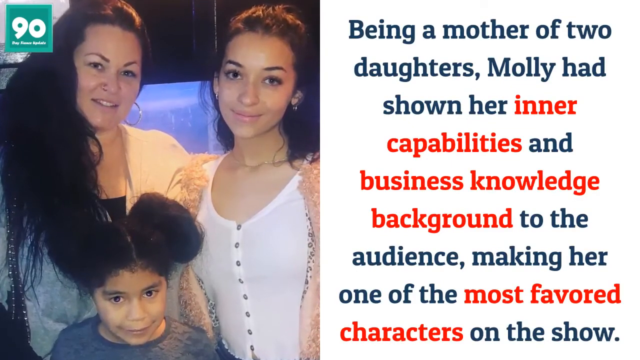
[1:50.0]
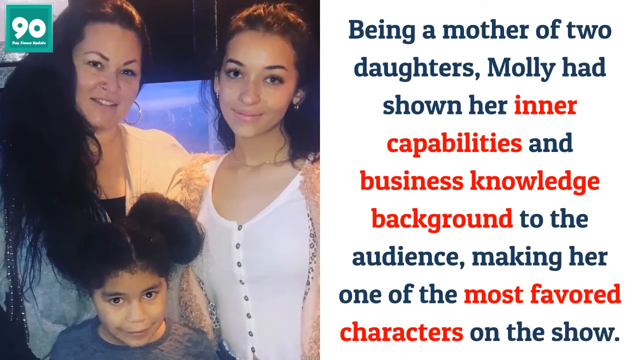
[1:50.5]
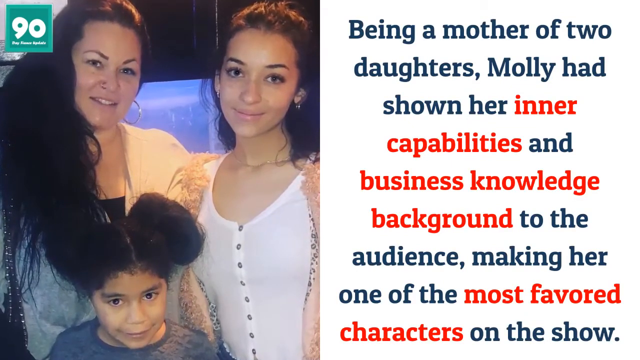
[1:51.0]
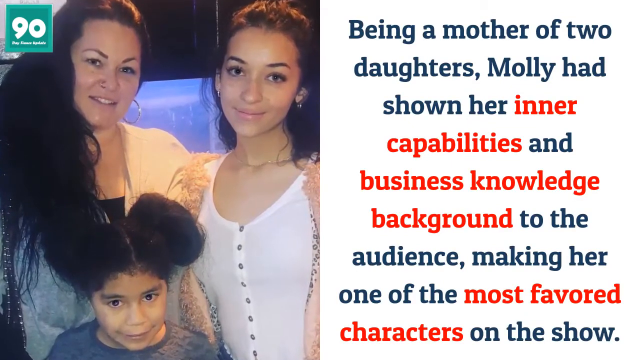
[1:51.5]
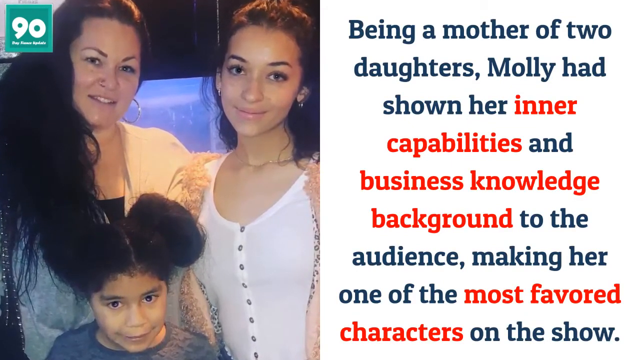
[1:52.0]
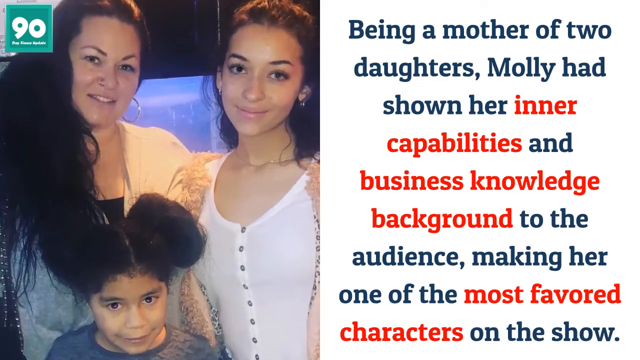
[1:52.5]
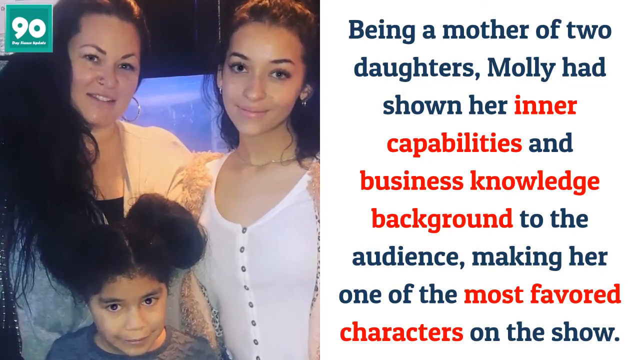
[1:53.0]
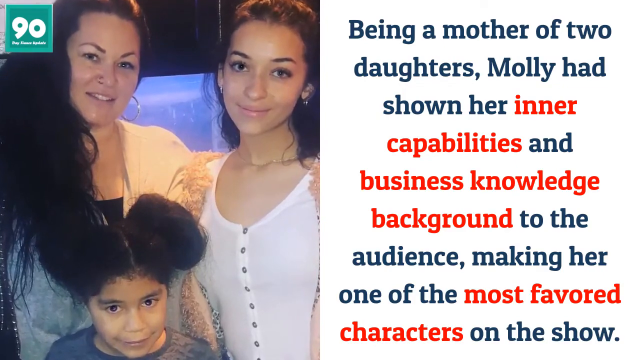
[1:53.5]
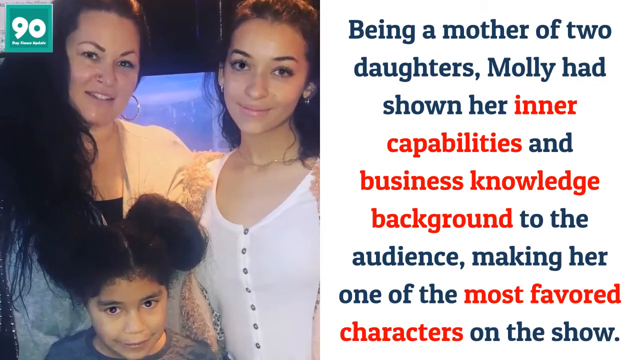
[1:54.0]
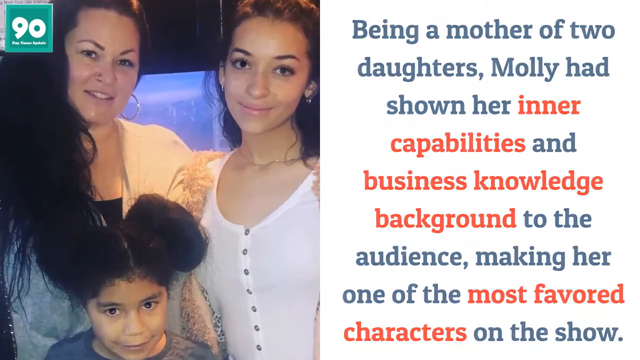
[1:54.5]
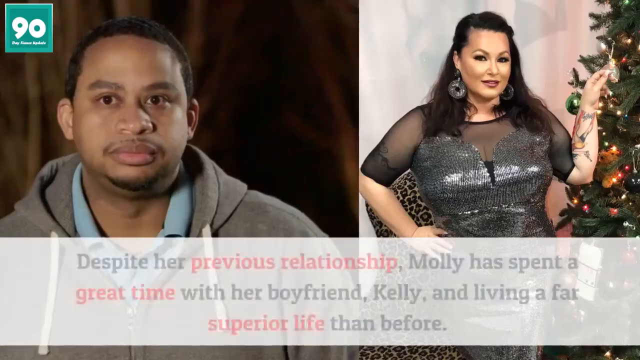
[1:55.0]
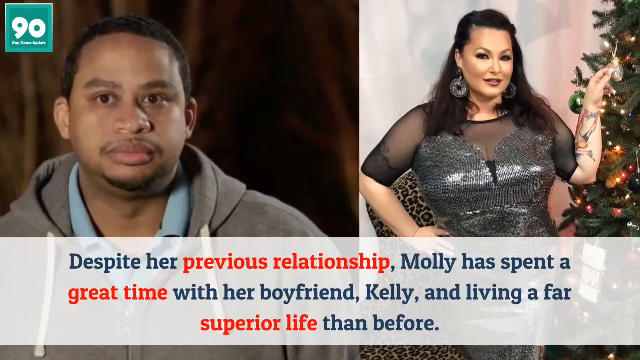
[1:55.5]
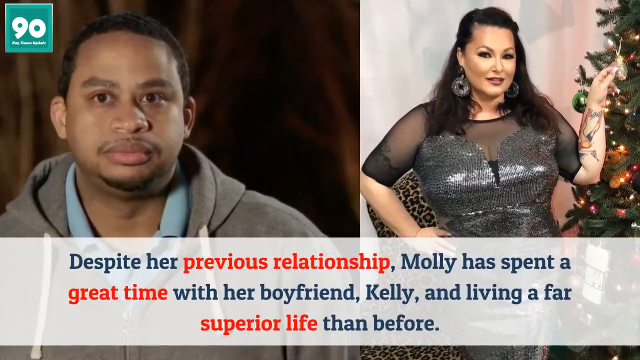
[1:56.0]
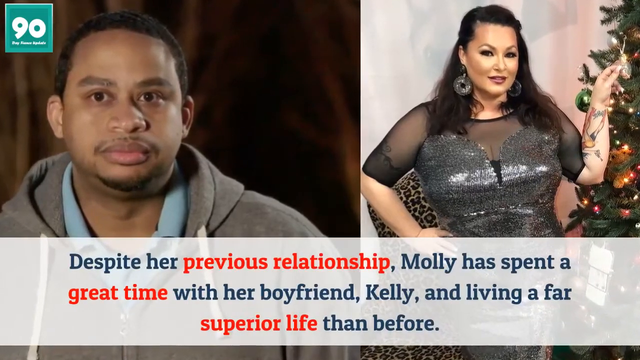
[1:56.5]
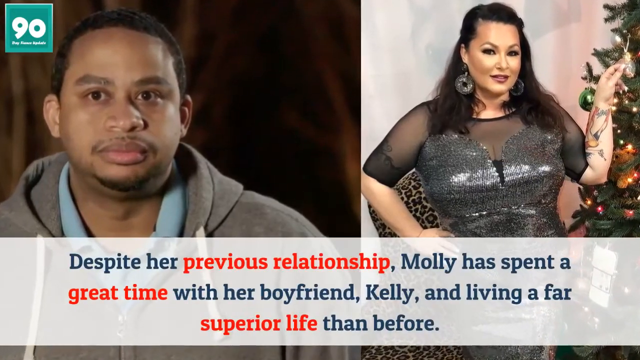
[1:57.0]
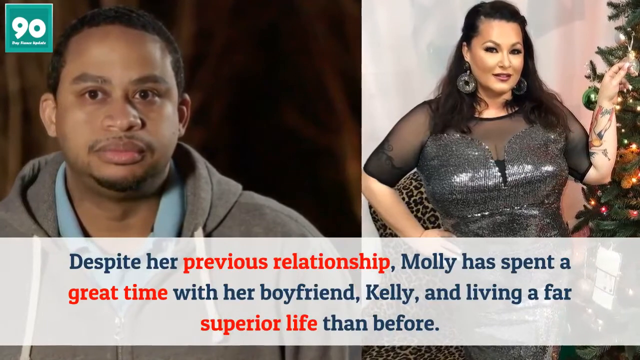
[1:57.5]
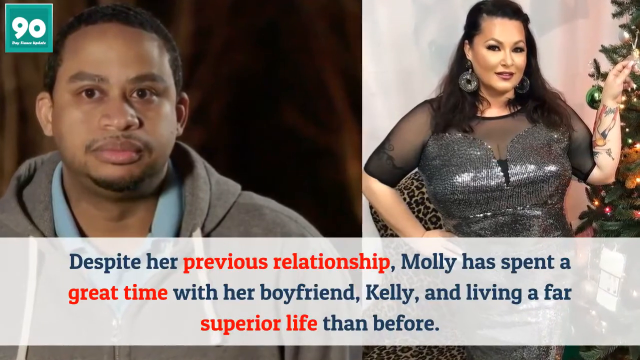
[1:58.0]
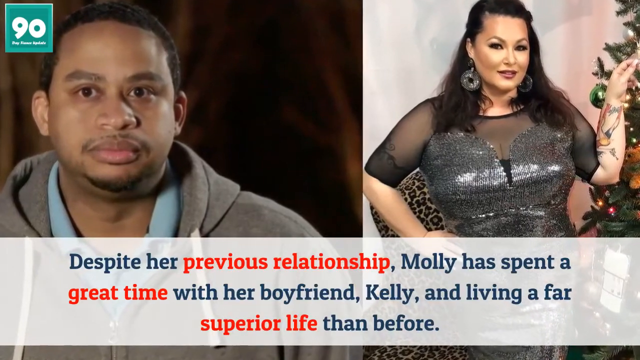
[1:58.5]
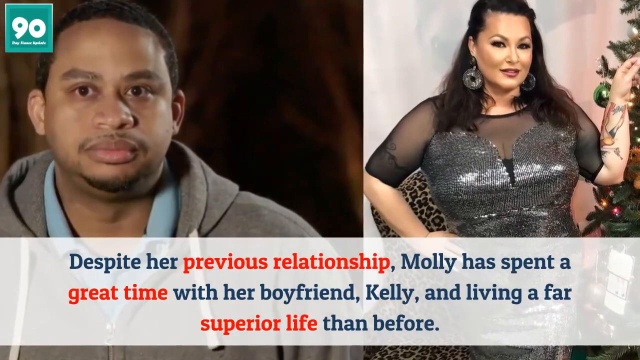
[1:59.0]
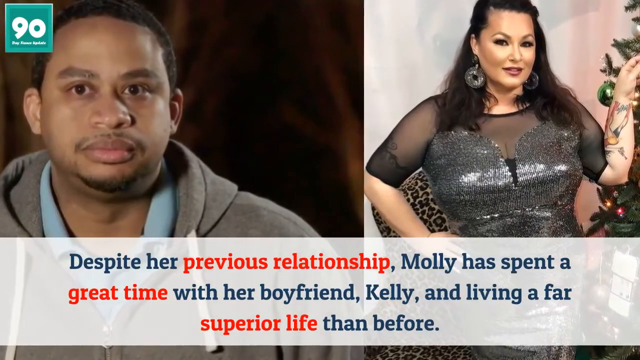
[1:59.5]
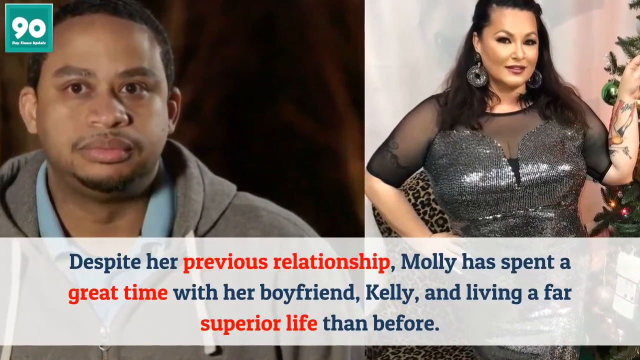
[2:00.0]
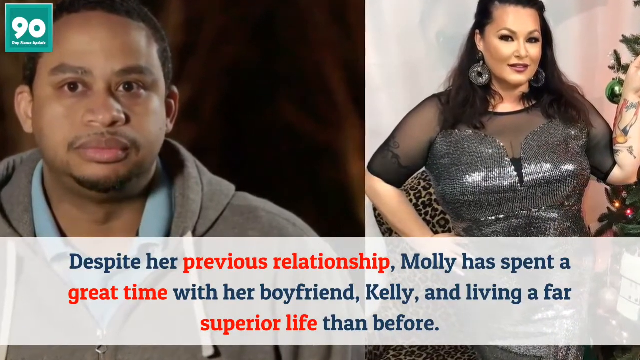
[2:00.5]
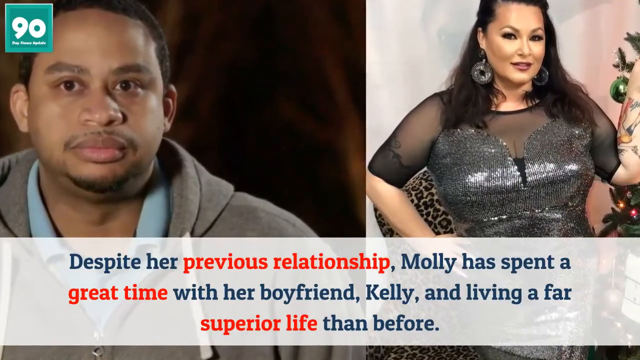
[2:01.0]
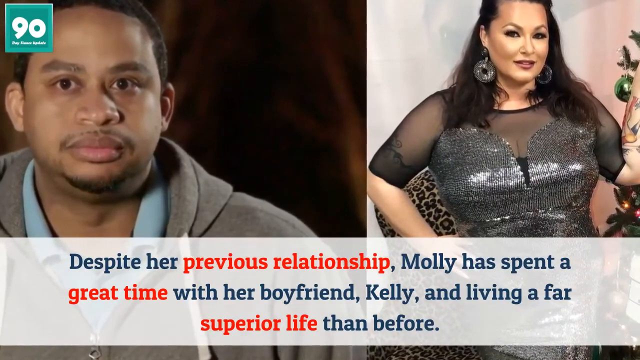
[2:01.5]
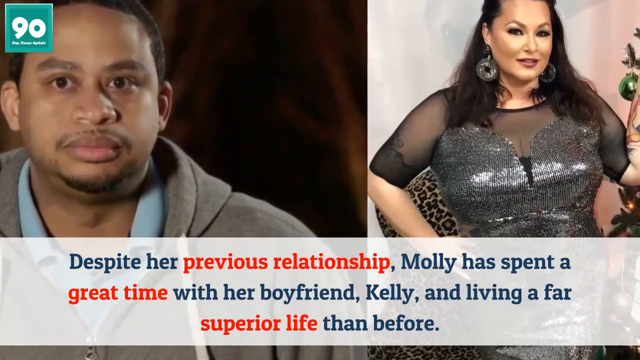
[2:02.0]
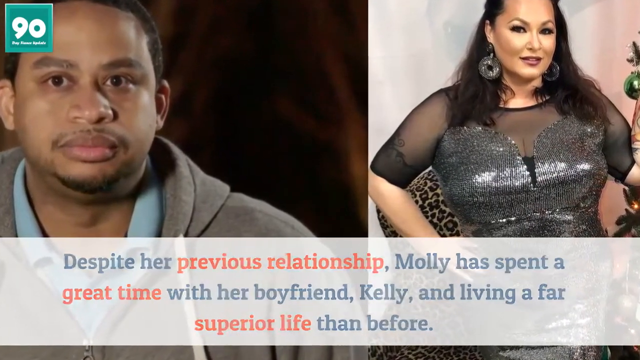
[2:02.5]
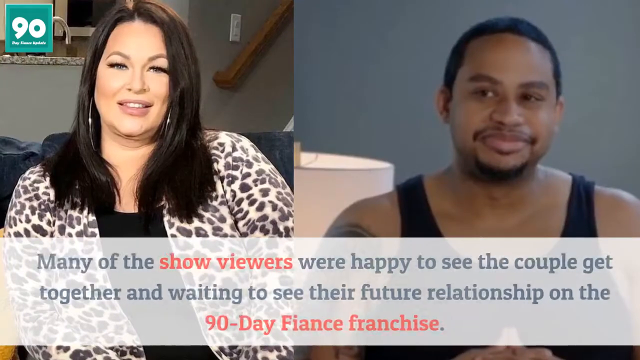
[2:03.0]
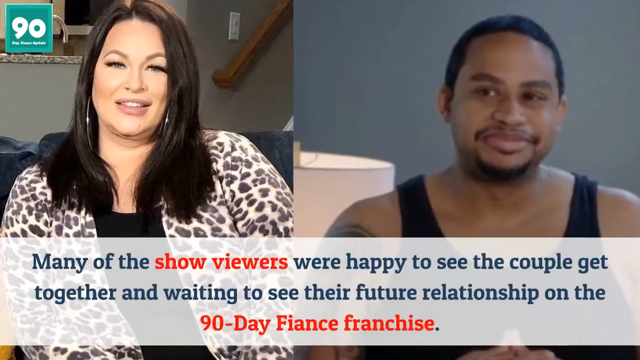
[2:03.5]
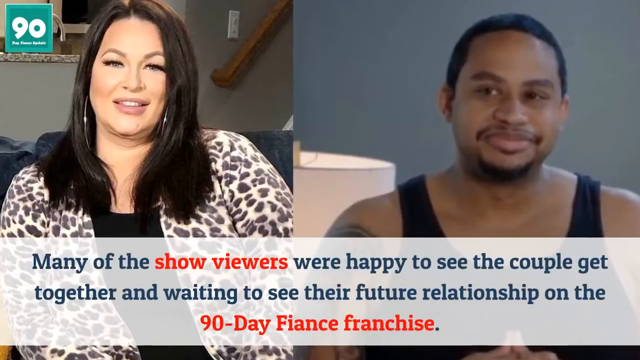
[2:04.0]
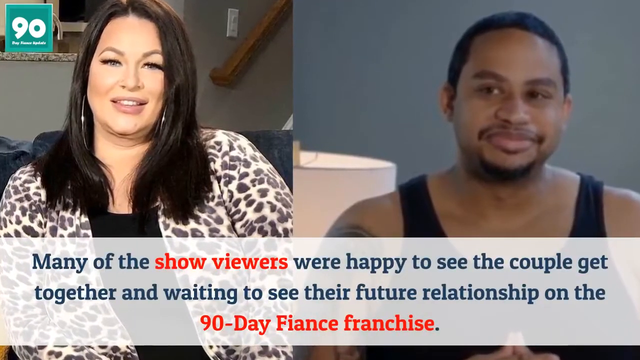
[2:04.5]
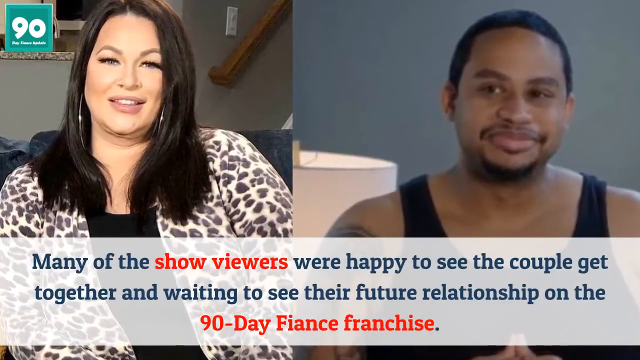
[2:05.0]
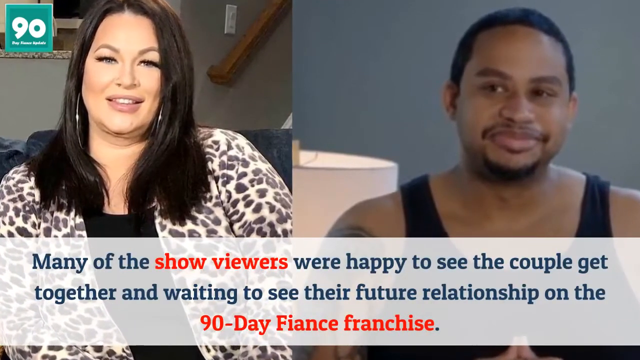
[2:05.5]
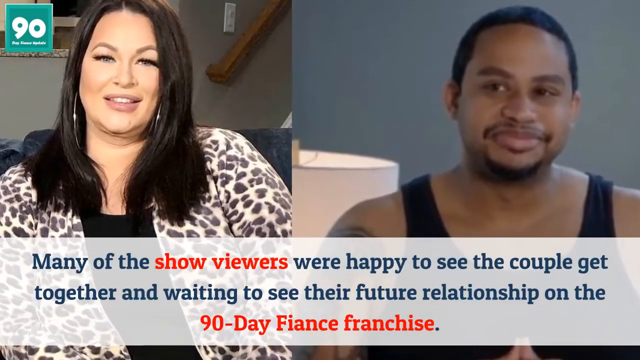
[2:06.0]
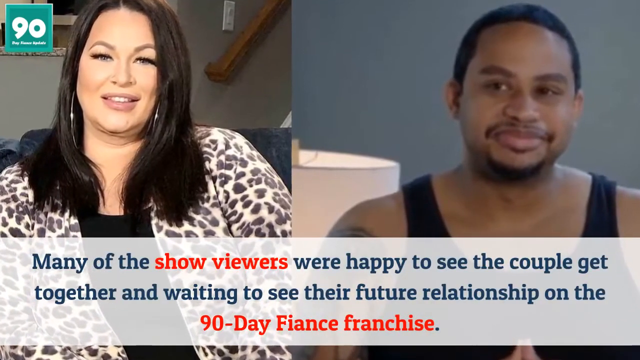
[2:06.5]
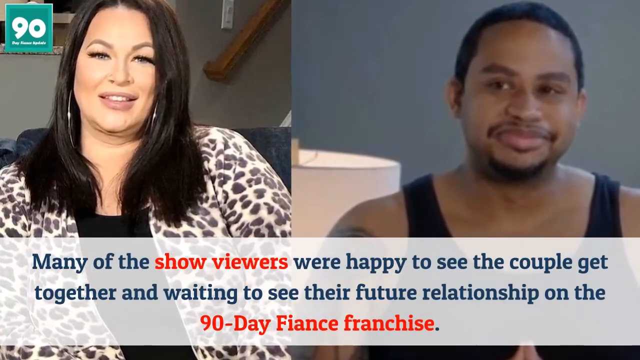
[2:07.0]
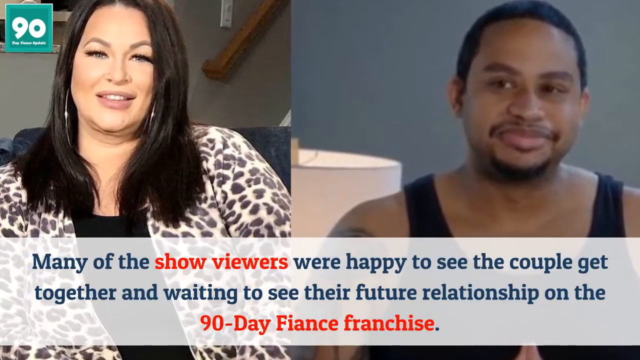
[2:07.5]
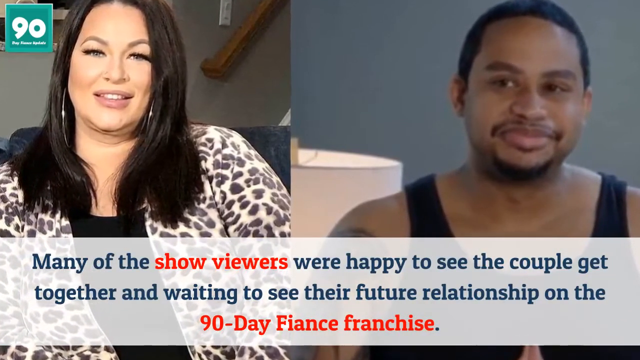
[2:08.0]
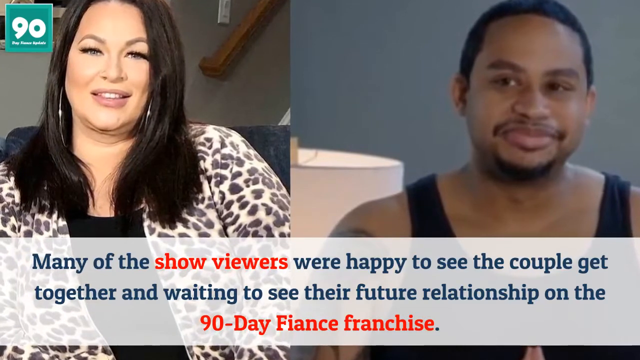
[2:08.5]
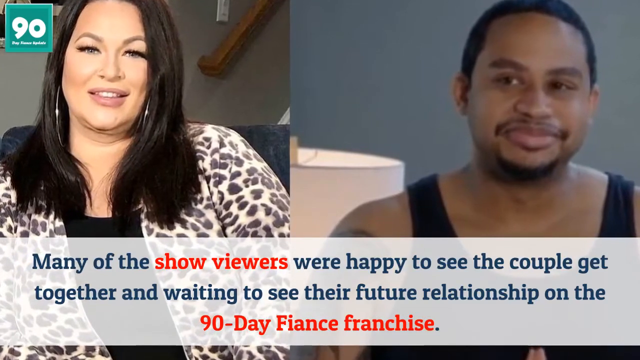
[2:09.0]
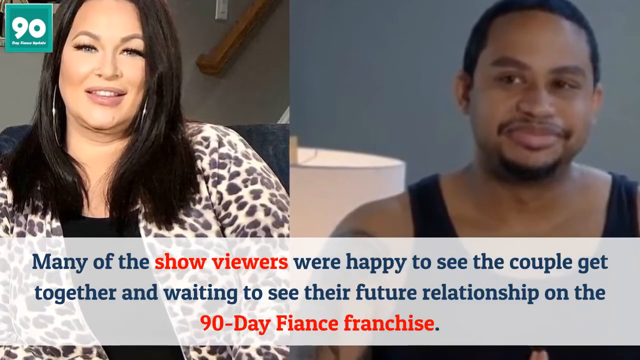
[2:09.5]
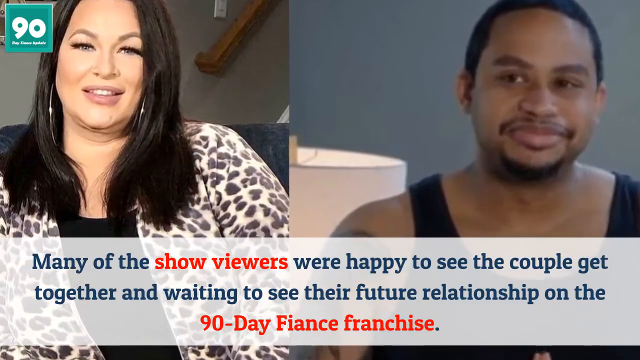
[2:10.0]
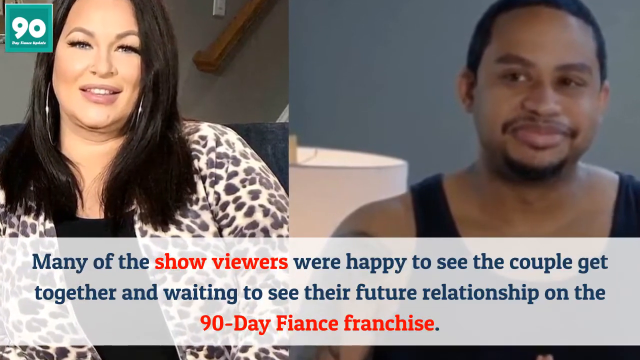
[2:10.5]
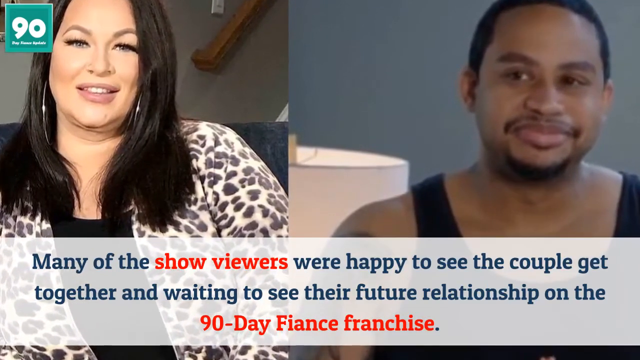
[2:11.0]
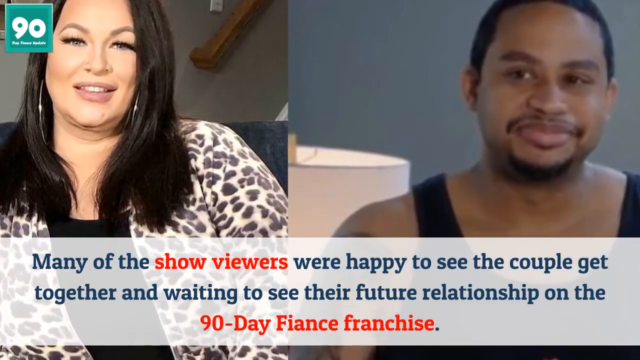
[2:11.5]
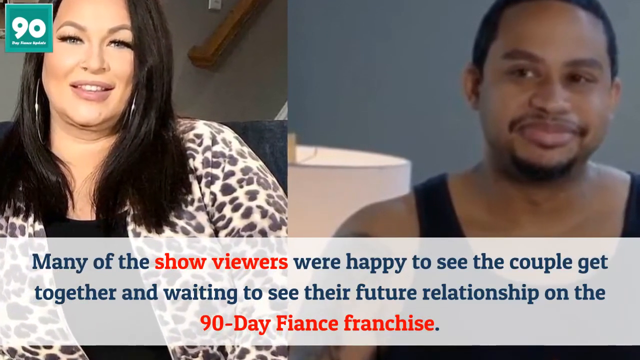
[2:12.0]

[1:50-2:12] An image on the left side depicts a woman and her two daughters: the mom on the left, the eldest daughter on the right, and the youngest daughter in the middle between them. The oldest daughter wears a white blouse, and they are all smiling for the camera. The mom has very long curly black hair over her right shoulder. The right side of the screen shows a white background with a caption that reads "being a mother of two daughters, Molly had shown her inner capabilities and business knowledge background to the audience, making her one of the most favorite characters on the show." The video then transitions to two images side by side: on the left, a man wearing a gray sweater; on the right, the mother from the previous image, wearing a very shiny gray dress with transparent black sleeves and posing next to a Christmas tree.